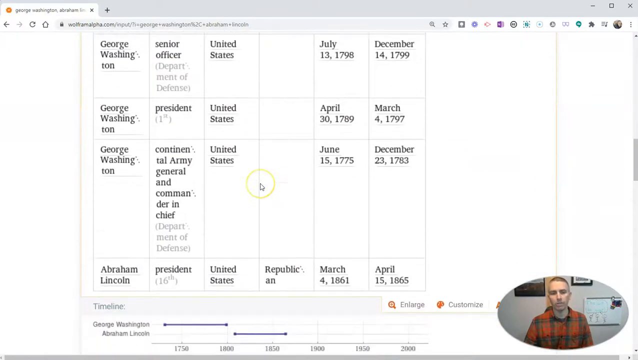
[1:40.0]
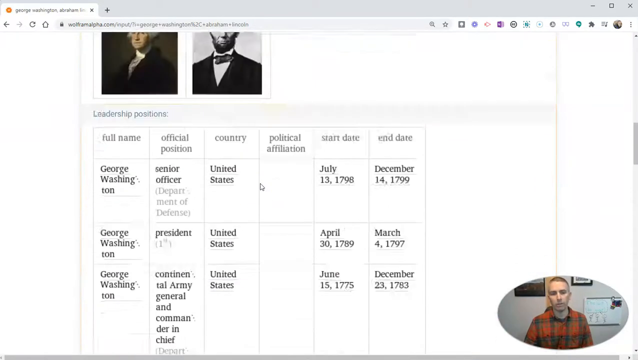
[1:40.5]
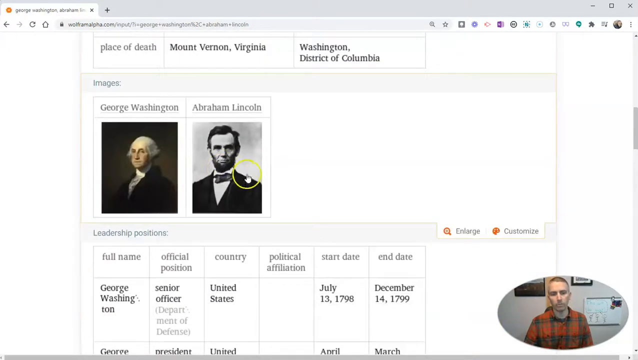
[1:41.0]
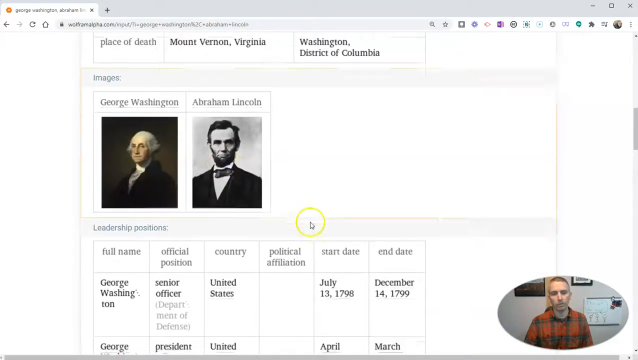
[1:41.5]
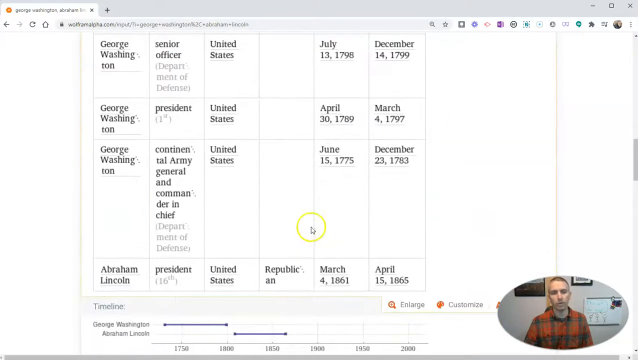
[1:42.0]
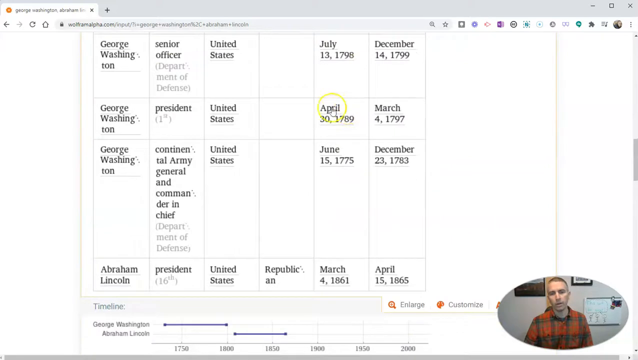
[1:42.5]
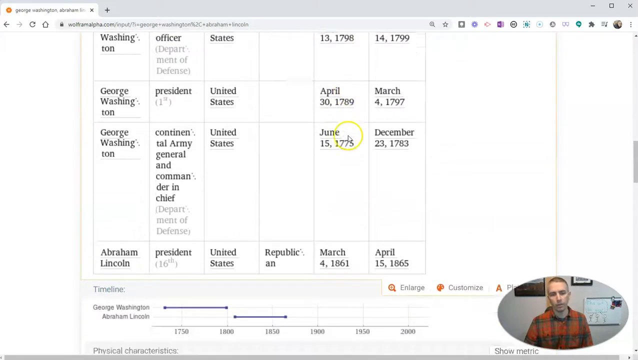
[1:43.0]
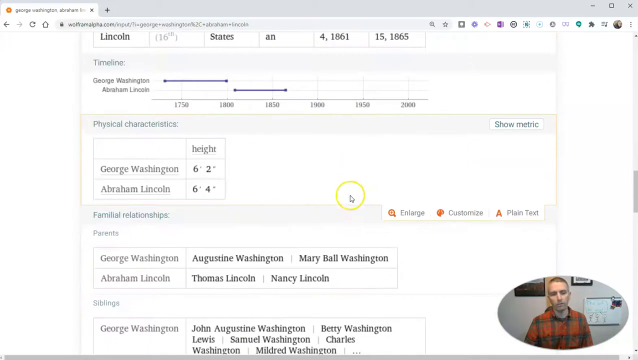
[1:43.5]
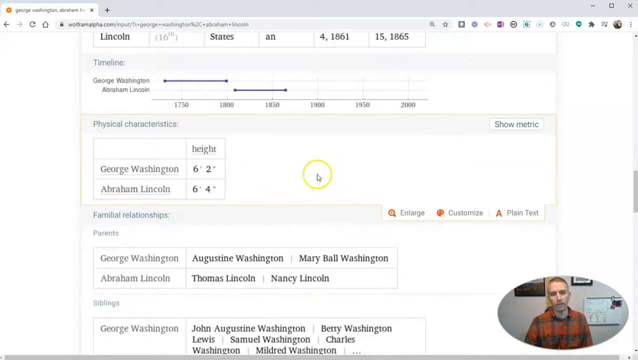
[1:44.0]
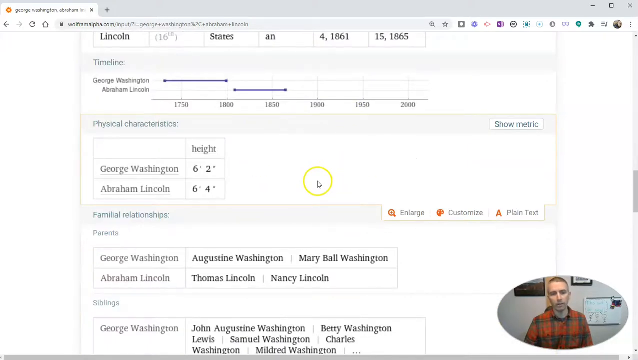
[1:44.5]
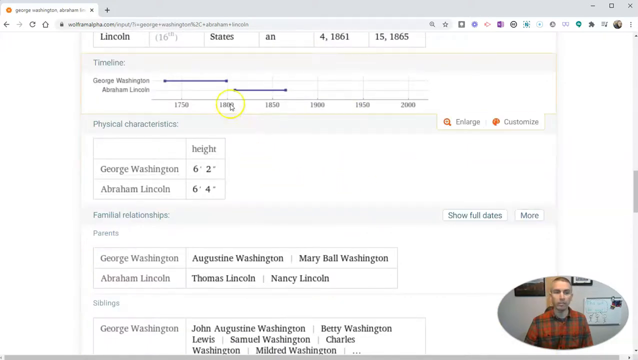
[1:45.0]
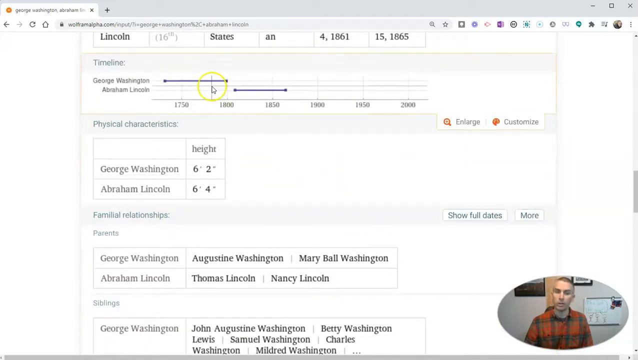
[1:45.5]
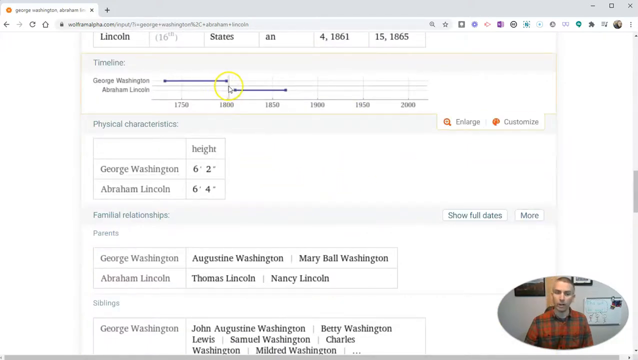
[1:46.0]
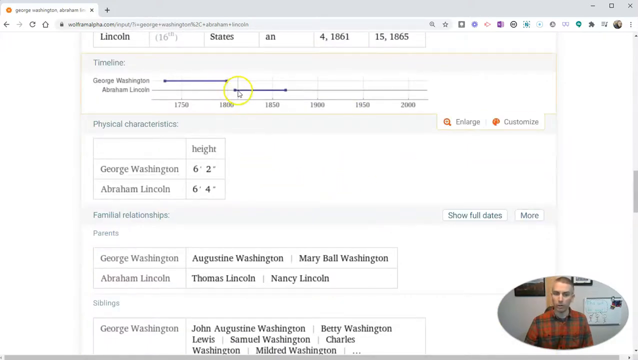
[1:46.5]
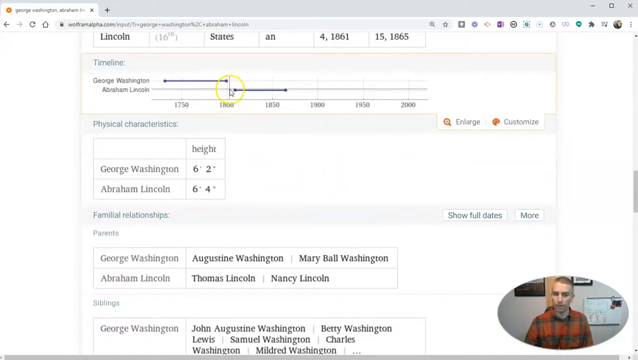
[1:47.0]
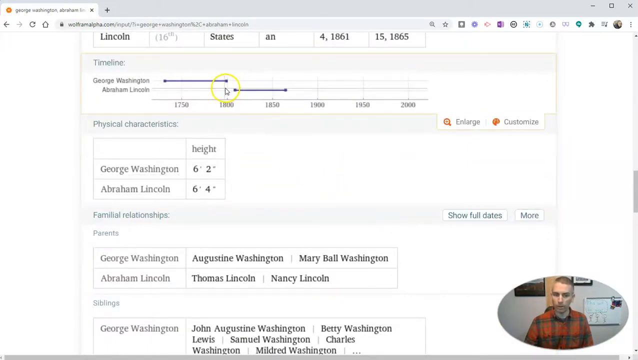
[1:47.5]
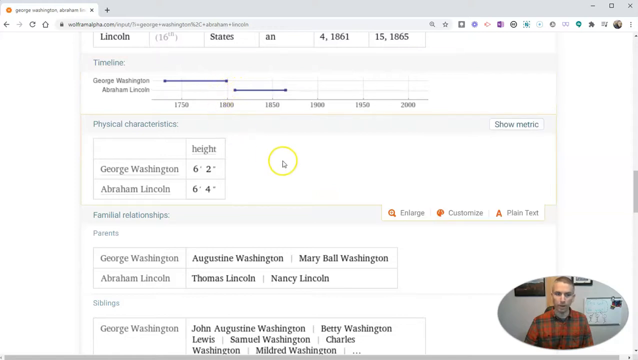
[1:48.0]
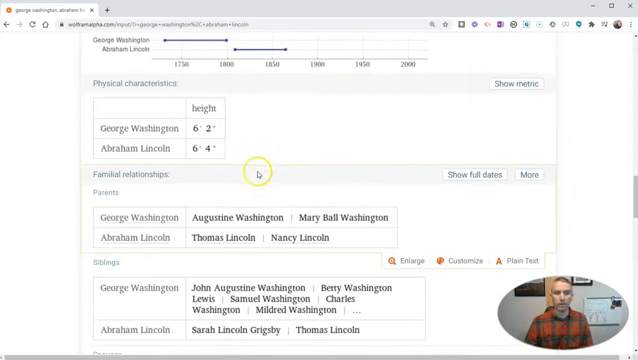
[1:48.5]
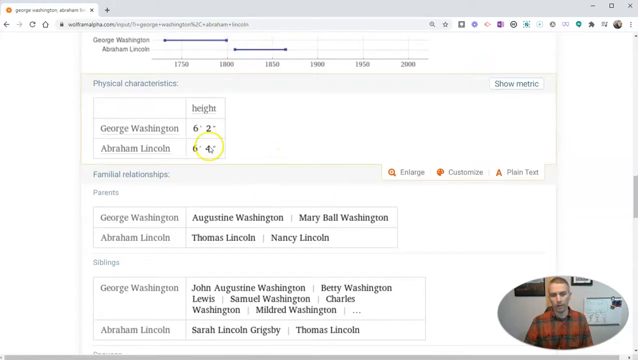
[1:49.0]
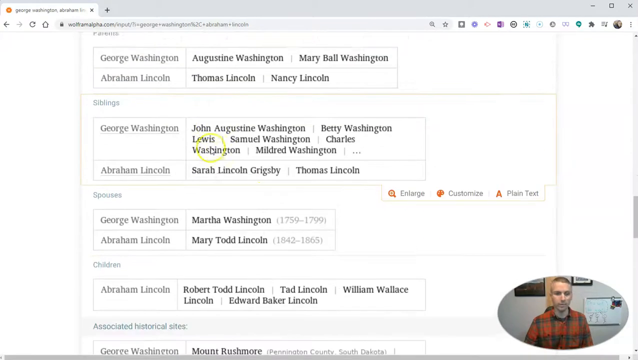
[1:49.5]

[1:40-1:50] The Wolfram Alpha page shows the comparison search for Abraham Lincoln and George Washington. The user moves the mouse cursor around and scrolls up and down the page very quickly; at one point the images of George Washington and Abraham Lincoln appear. The person is recording themselves in the lower right corner of the screen, talking while they use the site.